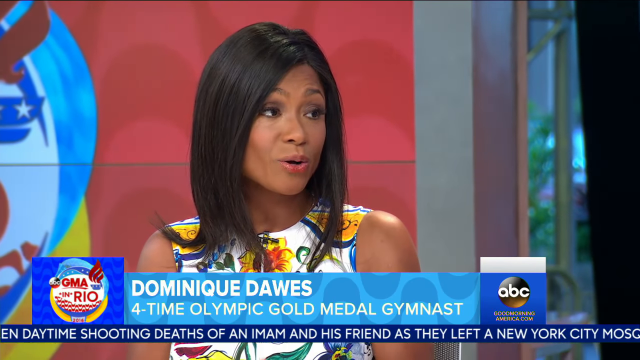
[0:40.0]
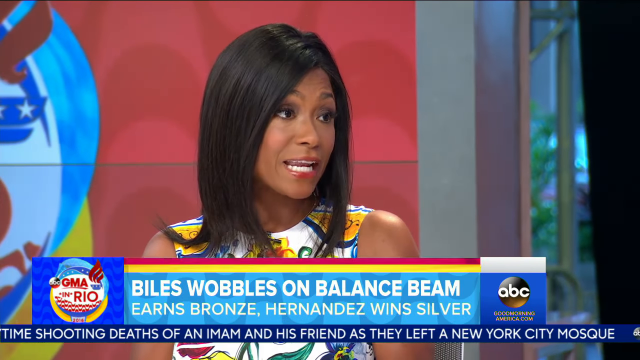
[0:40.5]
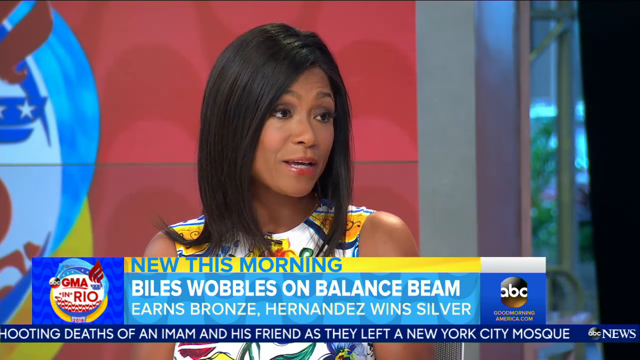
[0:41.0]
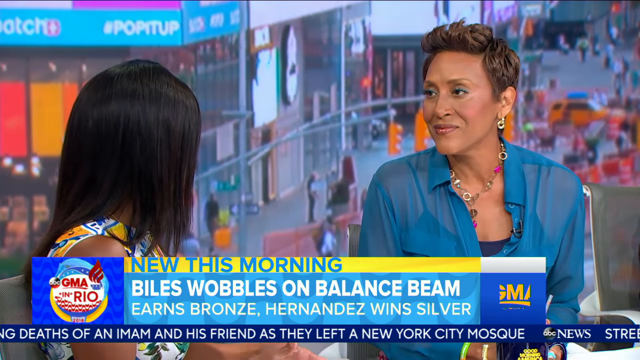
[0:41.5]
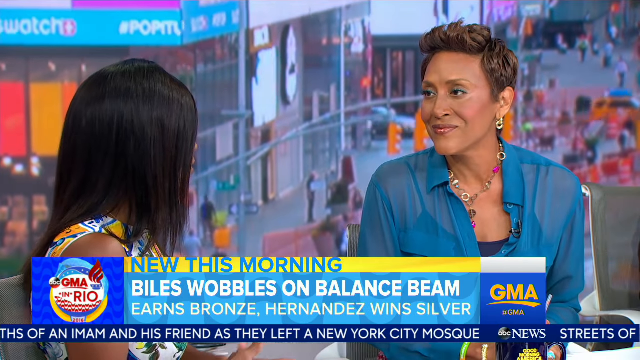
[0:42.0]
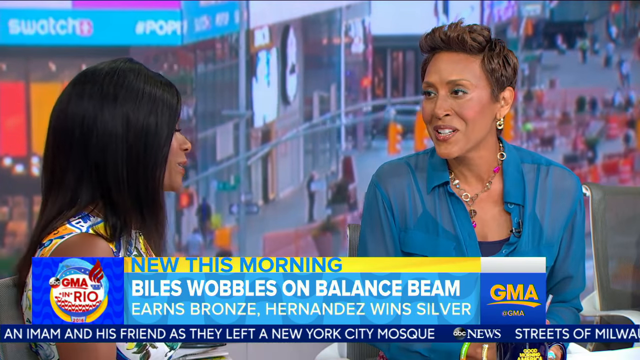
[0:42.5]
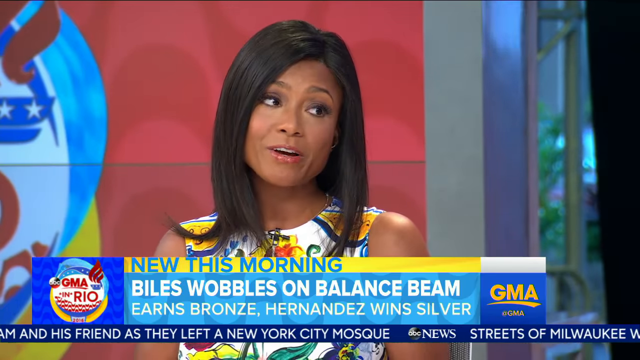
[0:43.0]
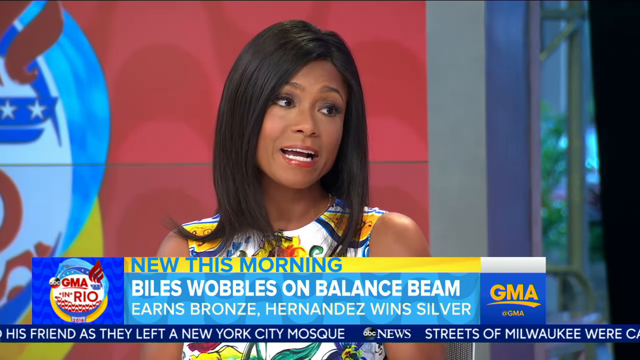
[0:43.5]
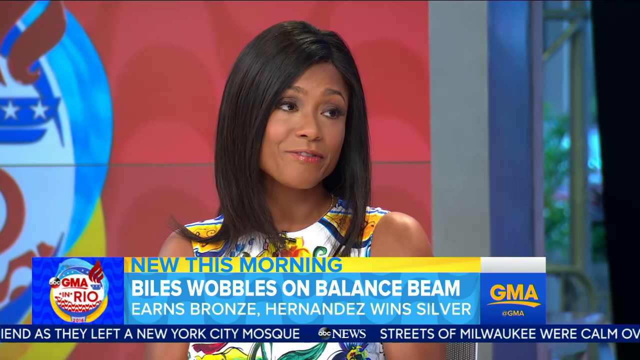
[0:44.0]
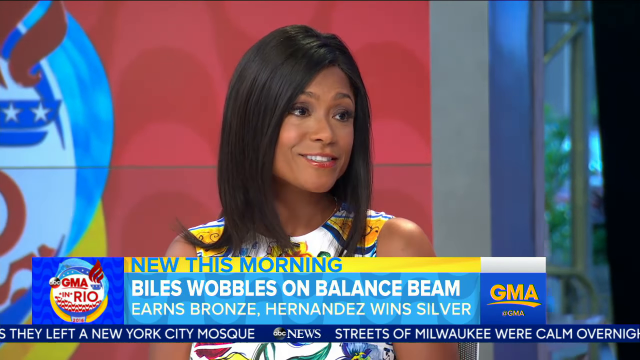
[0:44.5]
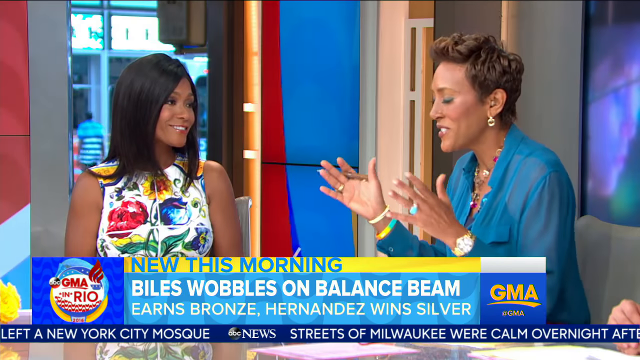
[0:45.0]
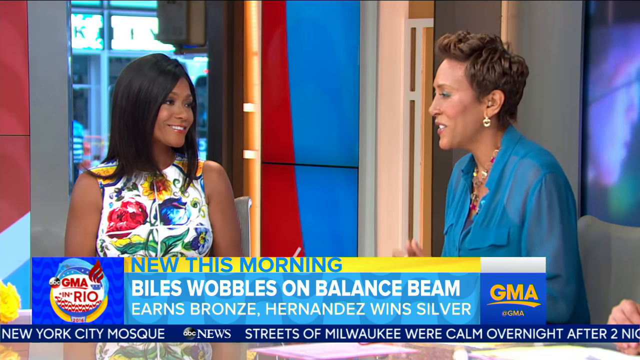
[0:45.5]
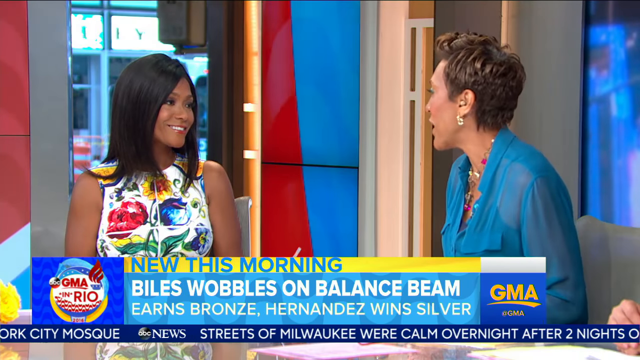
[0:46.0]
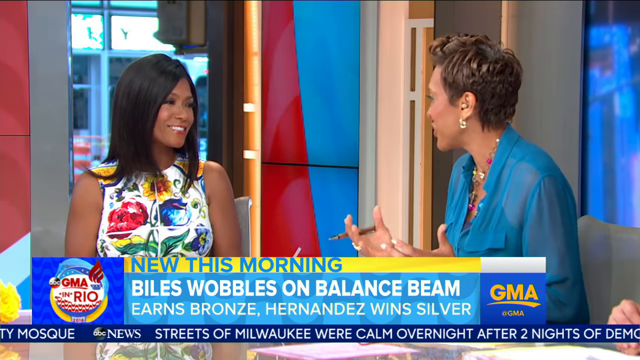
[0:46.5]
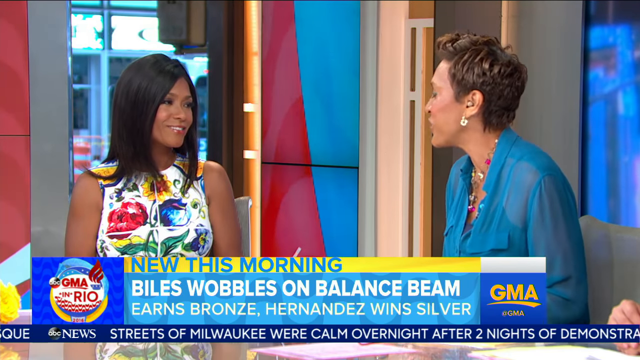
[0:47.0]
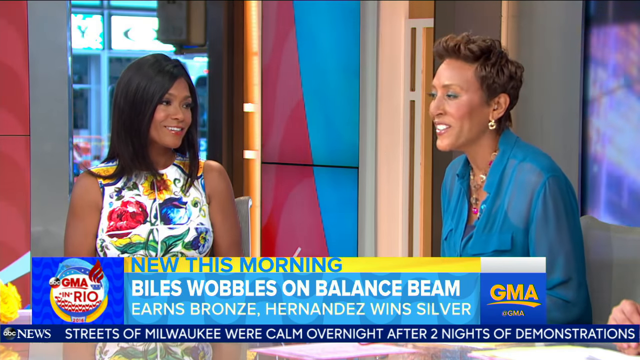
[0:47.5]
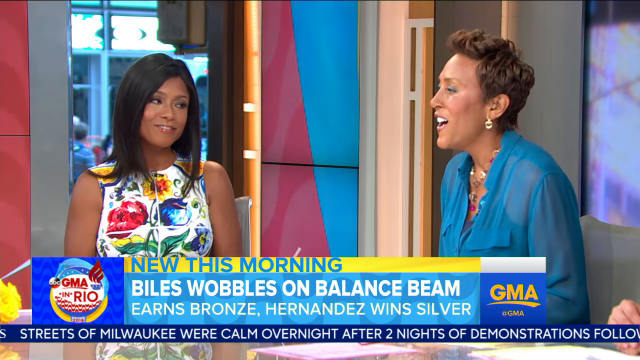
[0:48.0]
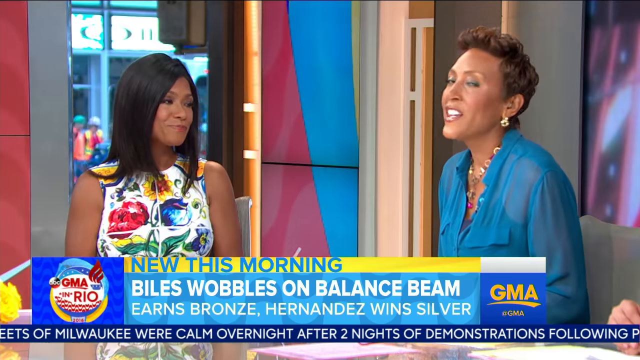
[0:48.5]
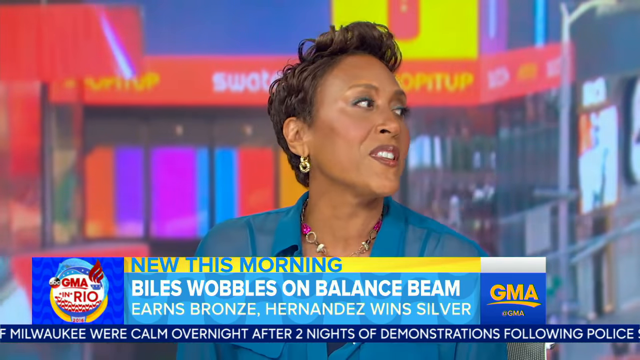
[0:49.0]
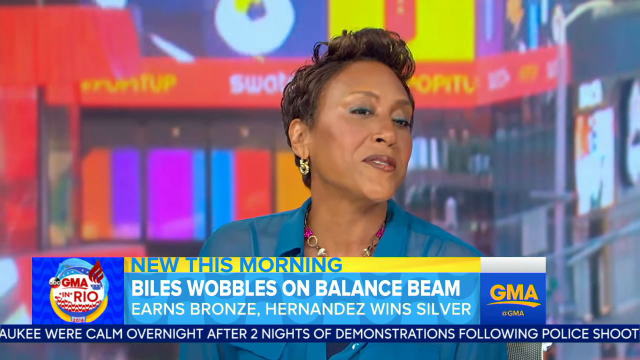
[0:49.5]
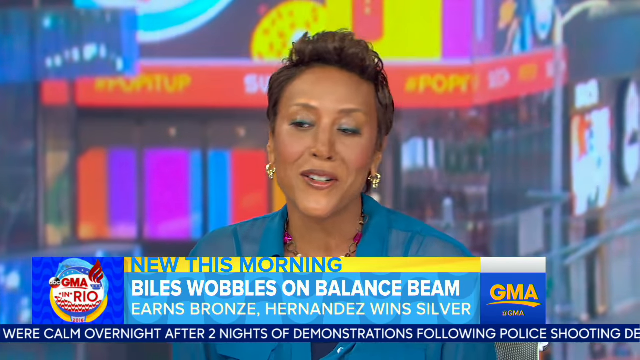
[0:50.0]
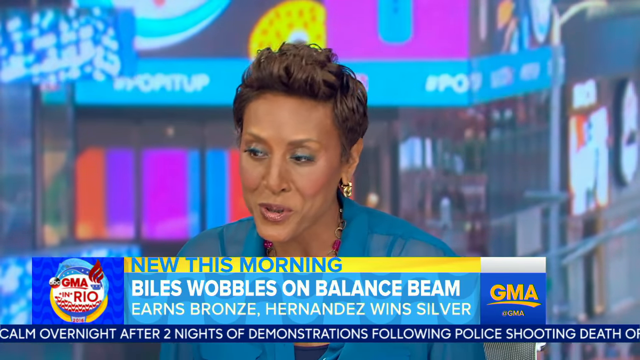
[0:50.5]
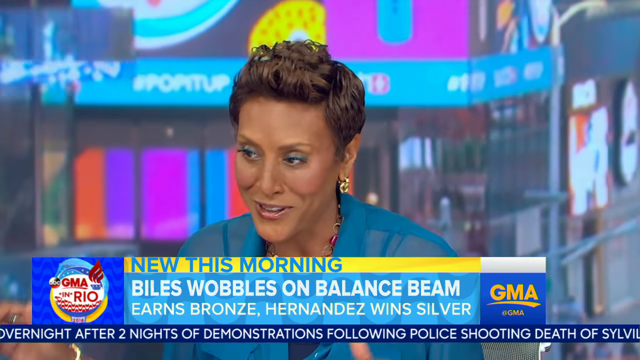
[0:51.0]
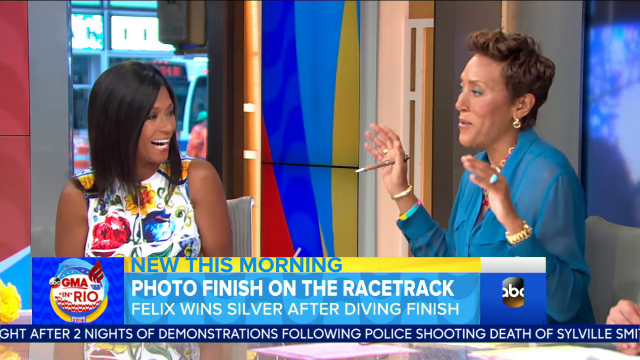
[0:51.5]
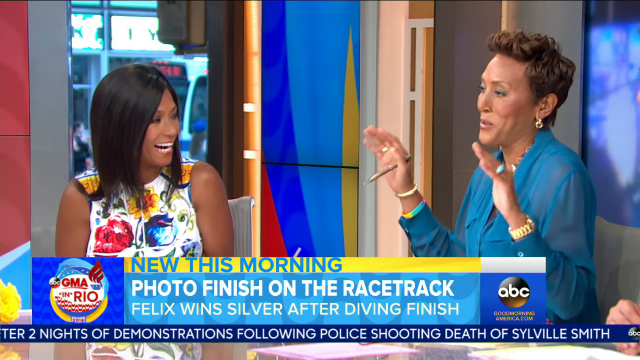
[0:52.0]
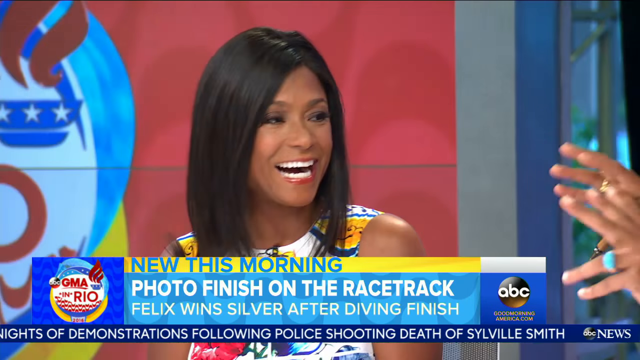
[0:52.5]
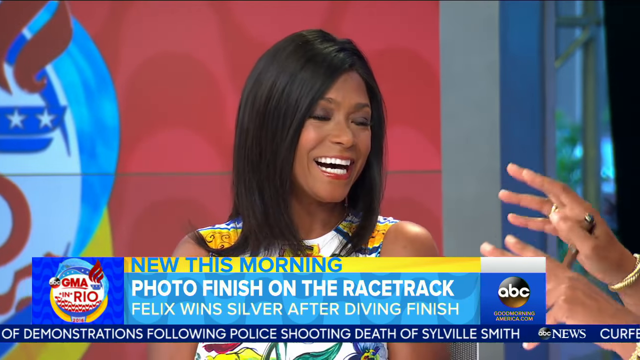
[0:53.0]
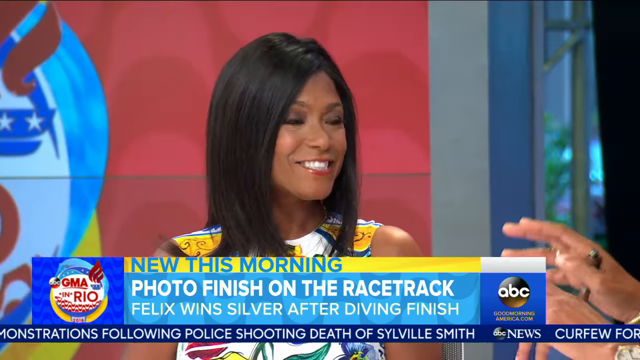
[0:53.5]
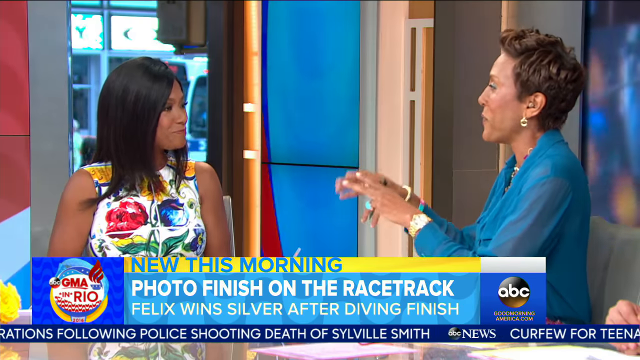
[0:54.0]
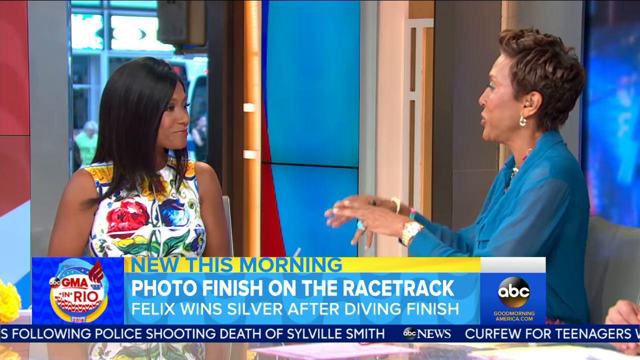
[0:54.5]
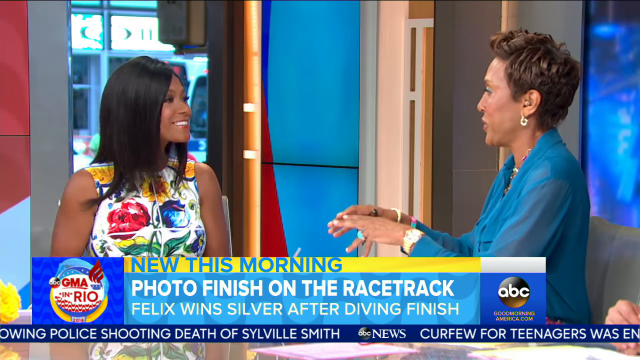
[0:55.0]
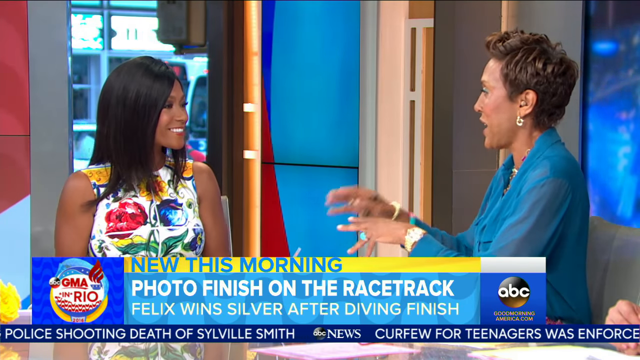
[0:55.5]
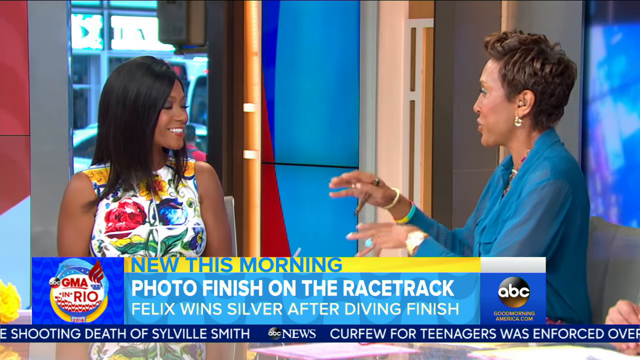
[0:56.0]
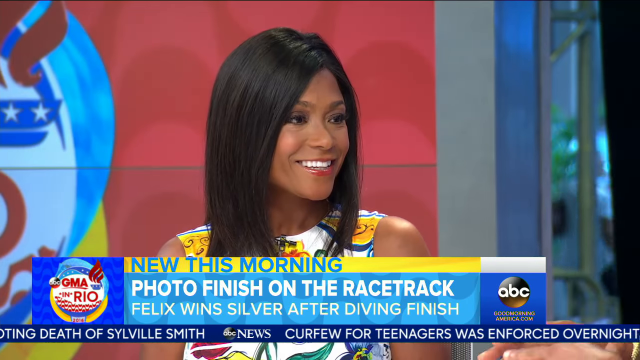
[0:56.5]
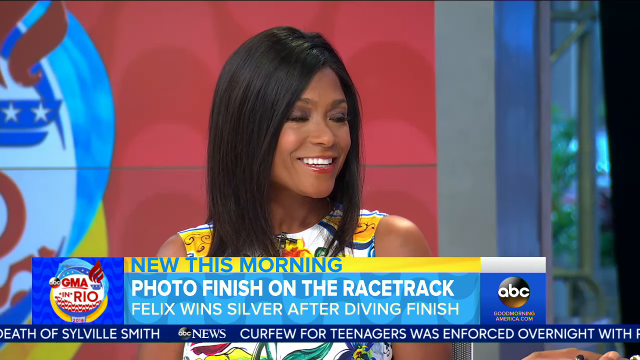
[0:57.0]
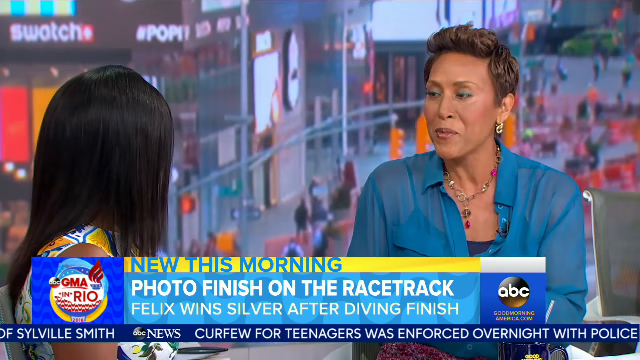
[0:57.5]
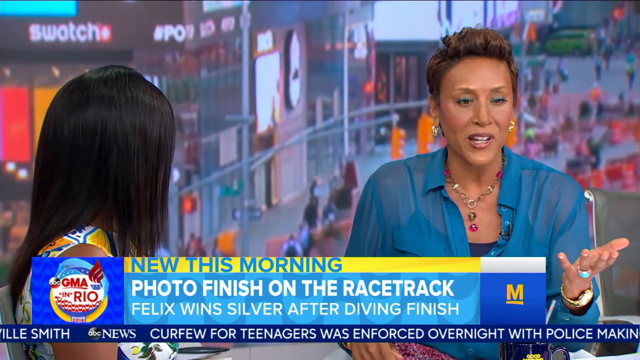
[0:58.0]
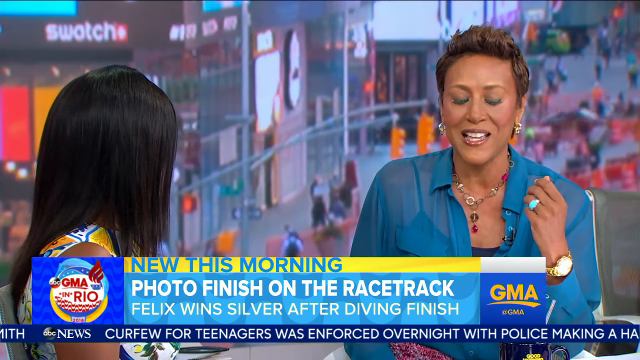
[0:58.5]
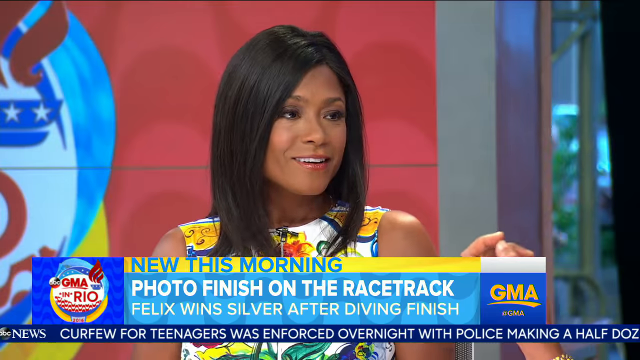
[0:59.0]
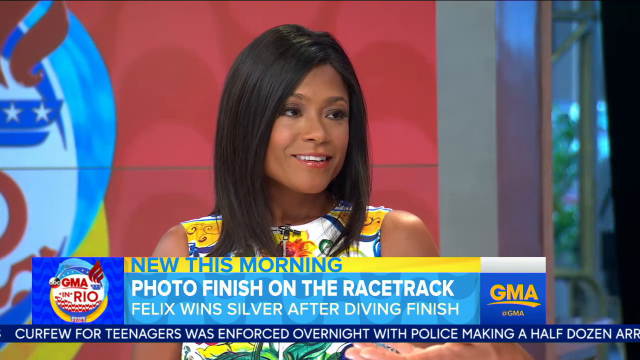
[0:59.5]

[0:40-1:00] Dominique Dawes, the four-time Olympic gold medalist, has shoulder-length hair, kind of parted on one side and going around her ears. She wears eyeliner and pink lipstick, and a dress cut off at the shoulders so her arms and shoulders are exposed; it has yellow, white and blue on it and looks like some kind of pattern, mostly hidden by her hair. She is talking to Robin Roberts, and behind them are the traffic of New York City, workers walking, the signs of Times Square with their lights moving, and cars driving by. Robin Roberts uses her hands a lot as they converse. She wears a see-through turquoise blouse over a dark-colored tank top, dangling earrings, eyeliner and pink lipstick, and her short hair is styled up on top. She has on multiple rings, an expensive-looking gold watch, and a necklace with many different things hanging from it, and she holds a pen between the fingers of her right hand.